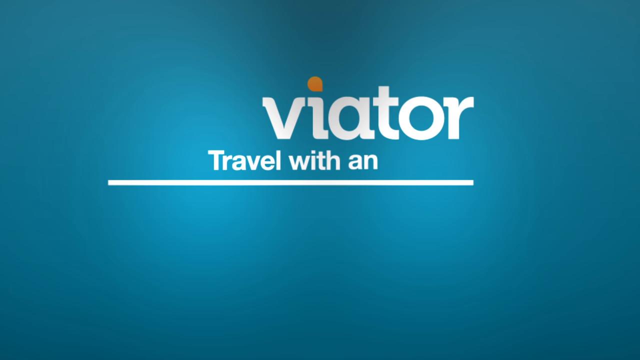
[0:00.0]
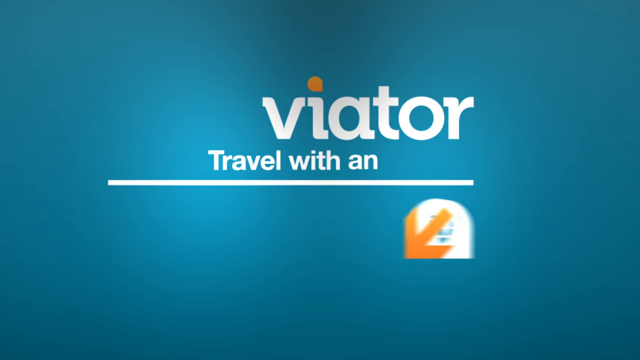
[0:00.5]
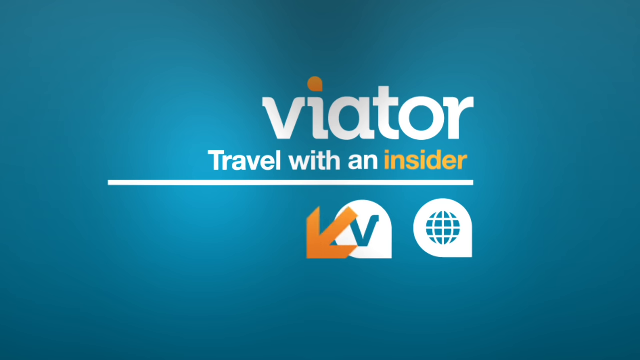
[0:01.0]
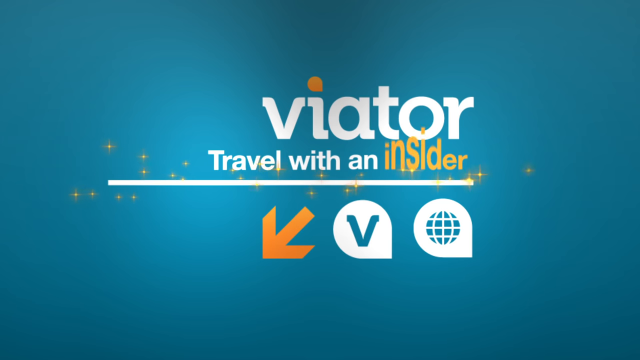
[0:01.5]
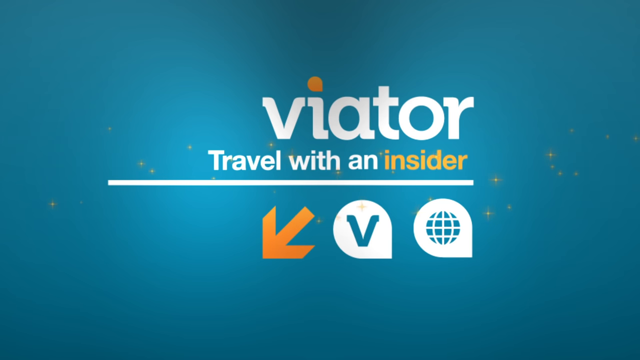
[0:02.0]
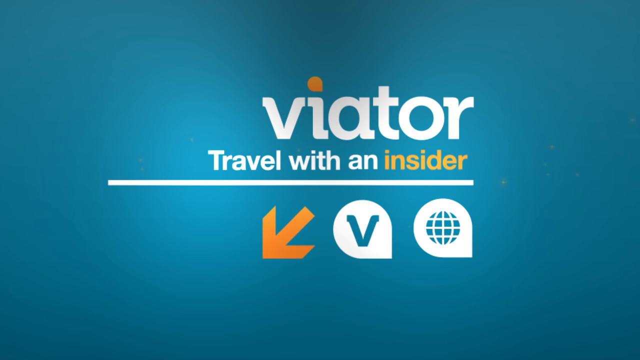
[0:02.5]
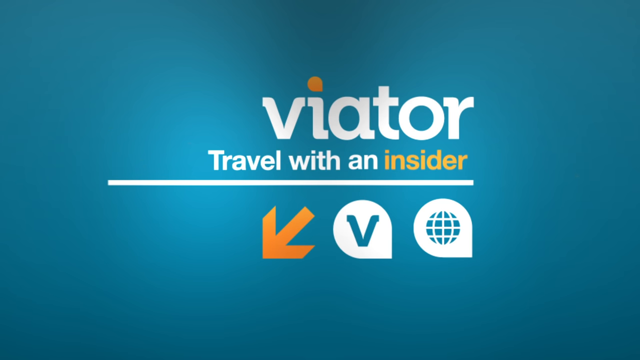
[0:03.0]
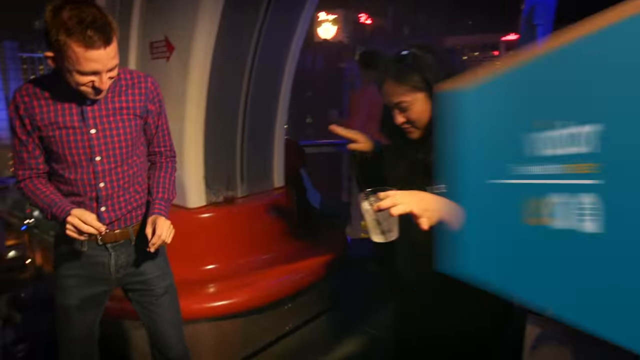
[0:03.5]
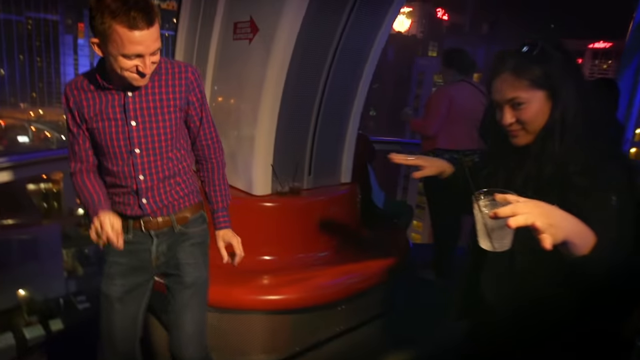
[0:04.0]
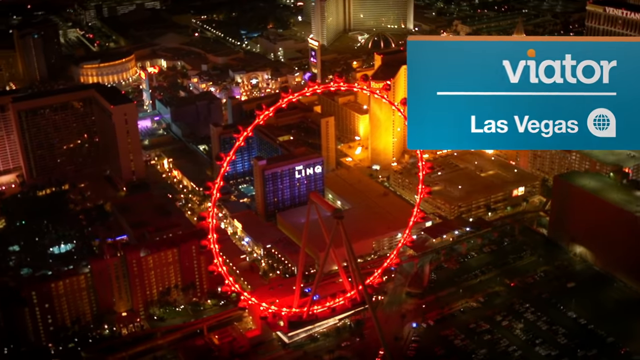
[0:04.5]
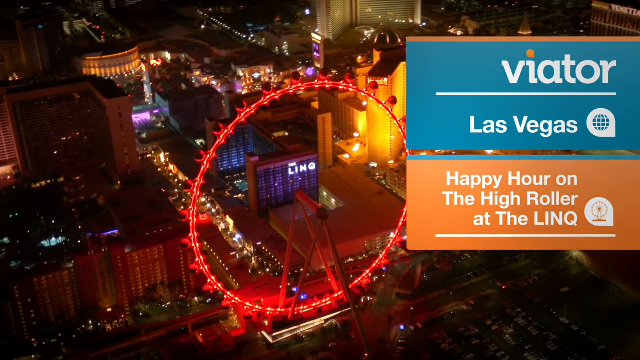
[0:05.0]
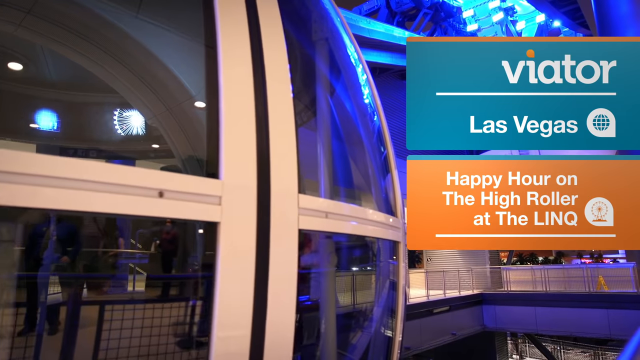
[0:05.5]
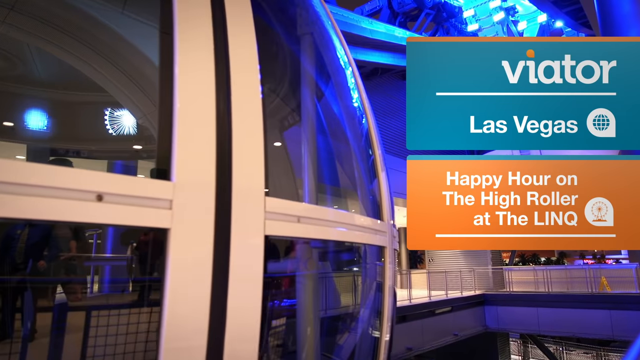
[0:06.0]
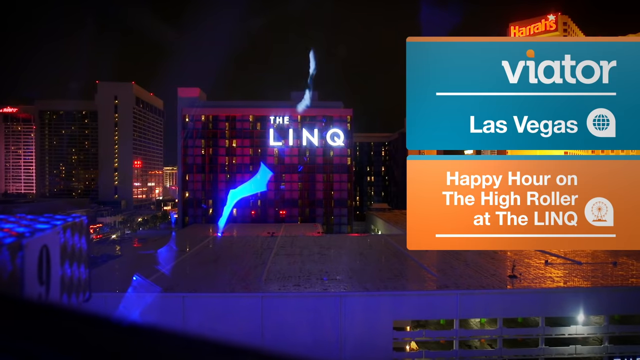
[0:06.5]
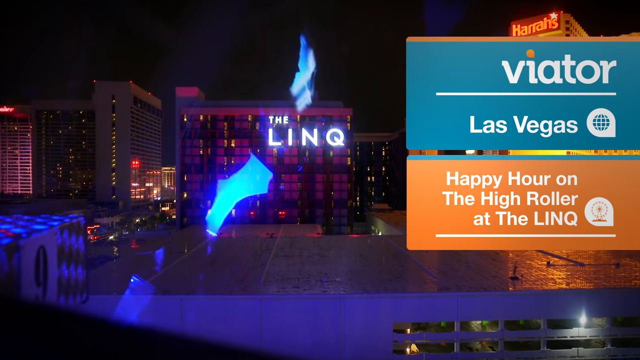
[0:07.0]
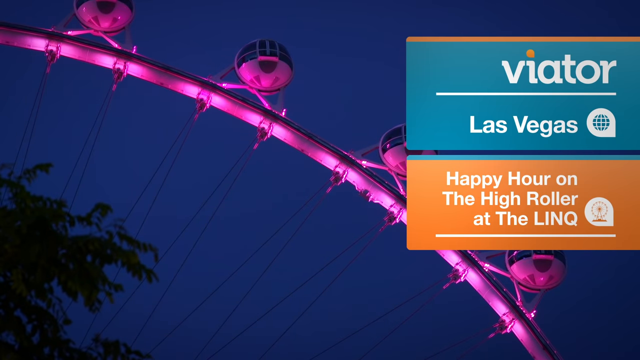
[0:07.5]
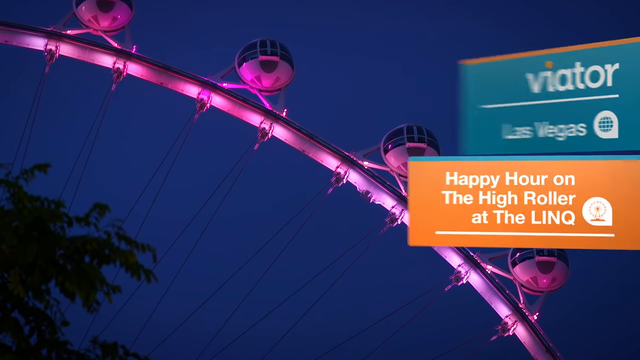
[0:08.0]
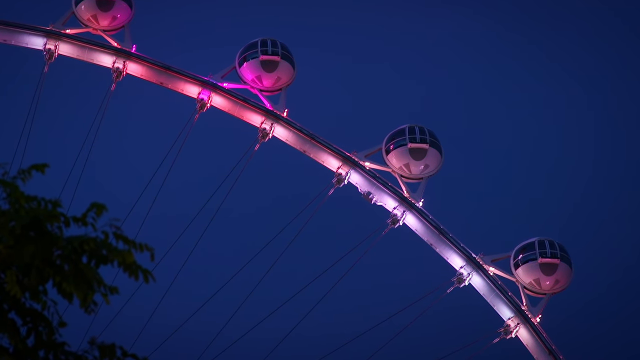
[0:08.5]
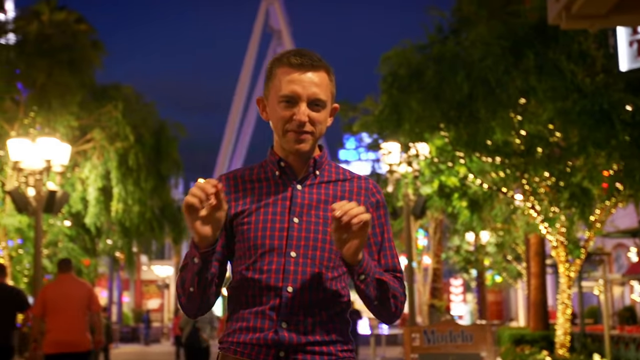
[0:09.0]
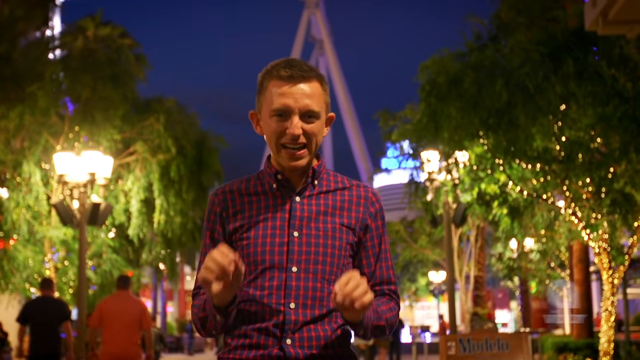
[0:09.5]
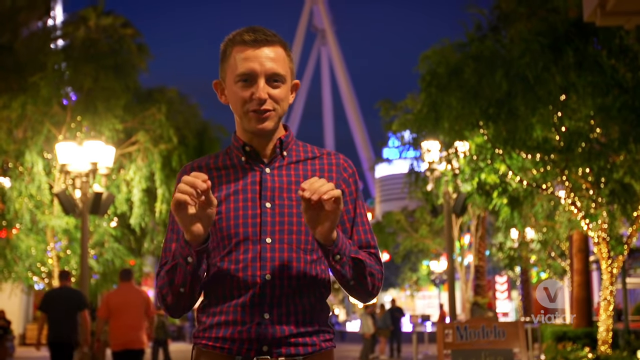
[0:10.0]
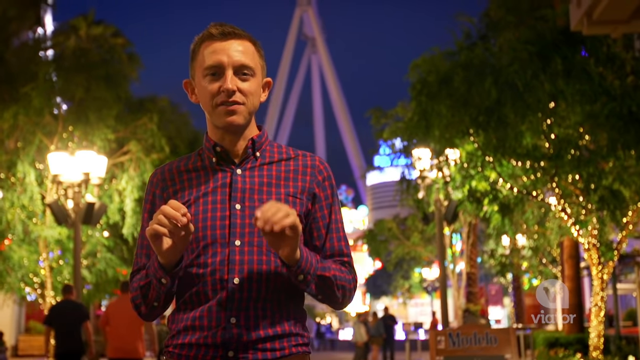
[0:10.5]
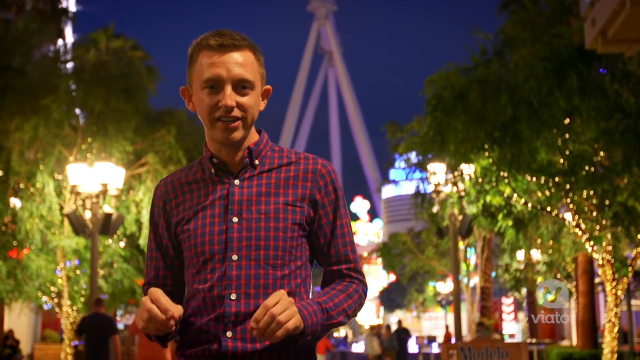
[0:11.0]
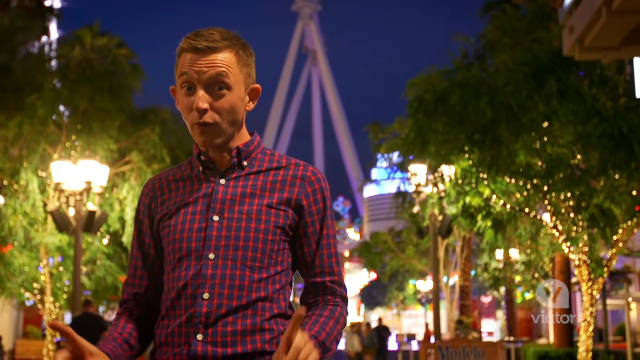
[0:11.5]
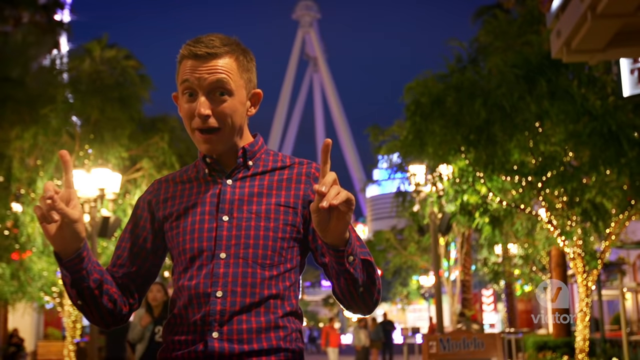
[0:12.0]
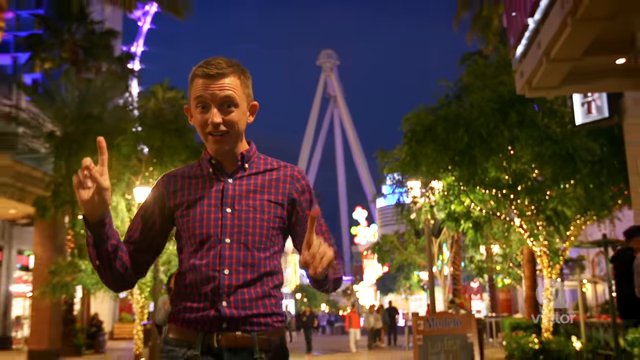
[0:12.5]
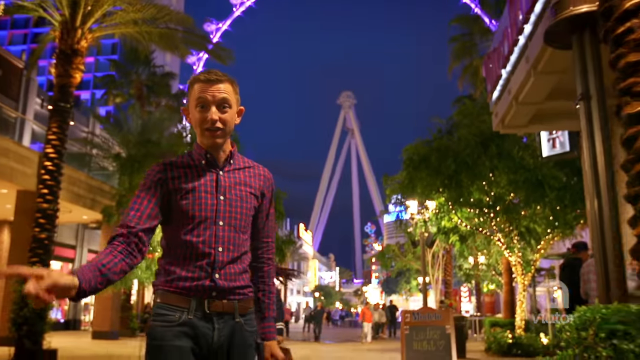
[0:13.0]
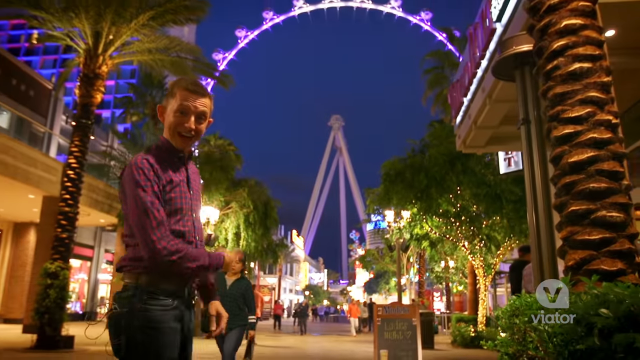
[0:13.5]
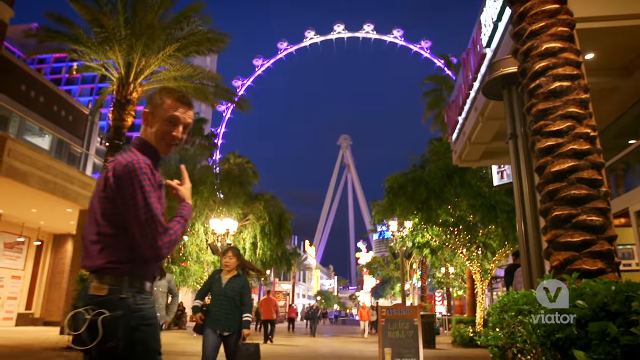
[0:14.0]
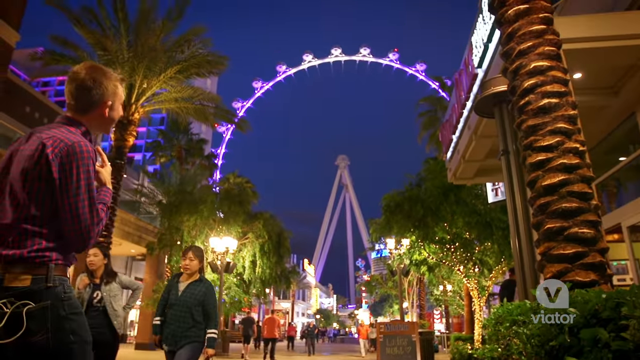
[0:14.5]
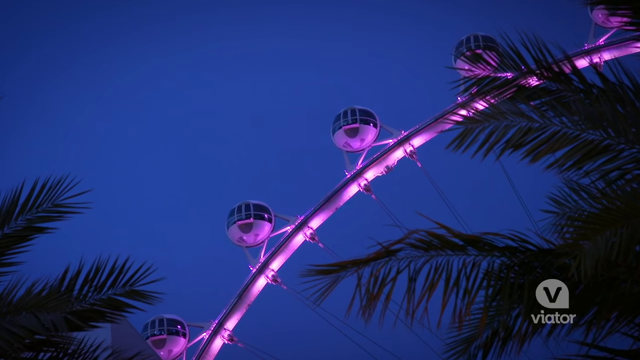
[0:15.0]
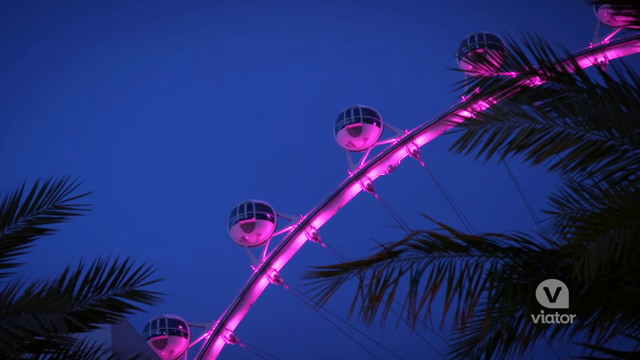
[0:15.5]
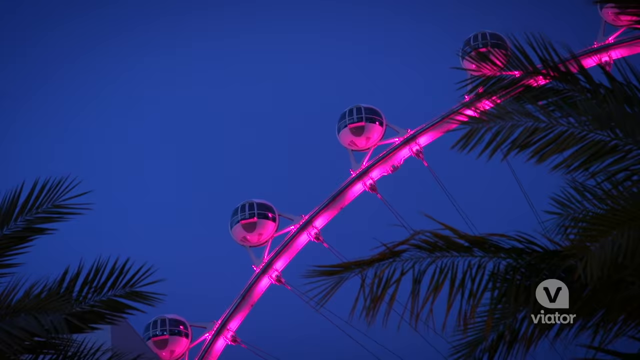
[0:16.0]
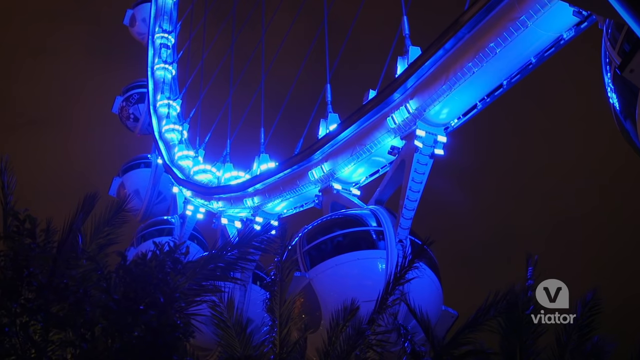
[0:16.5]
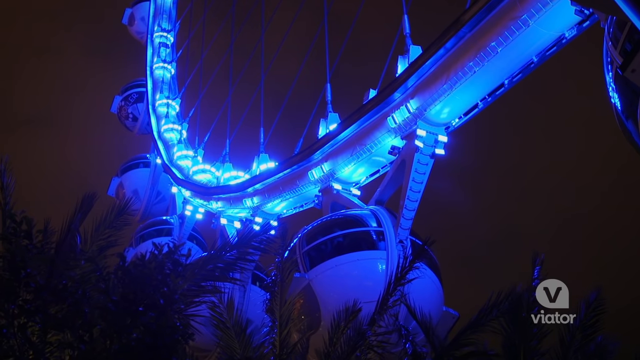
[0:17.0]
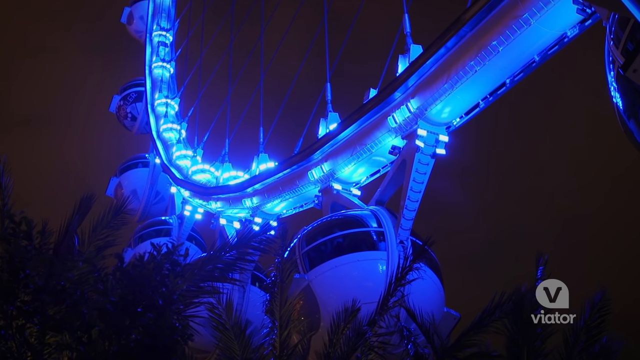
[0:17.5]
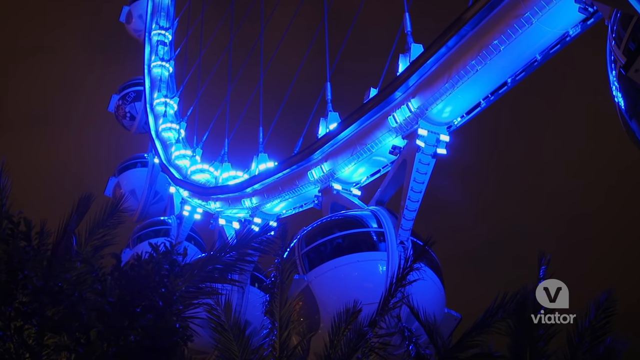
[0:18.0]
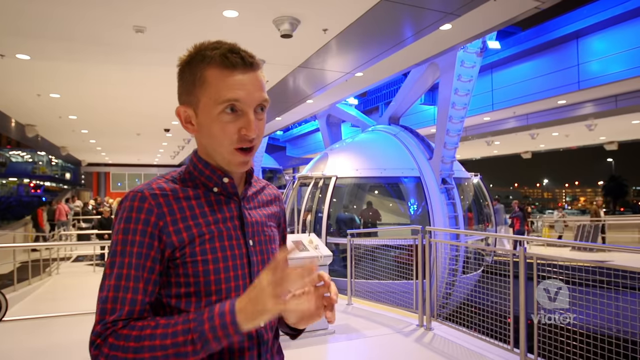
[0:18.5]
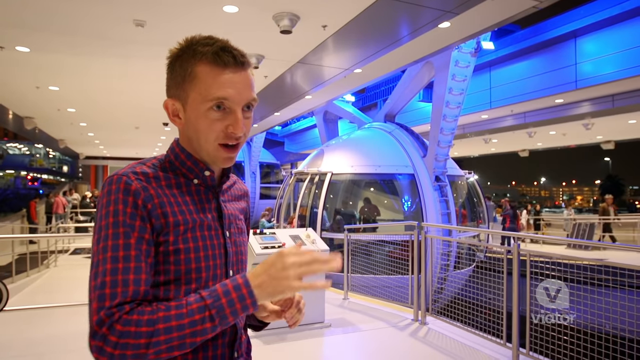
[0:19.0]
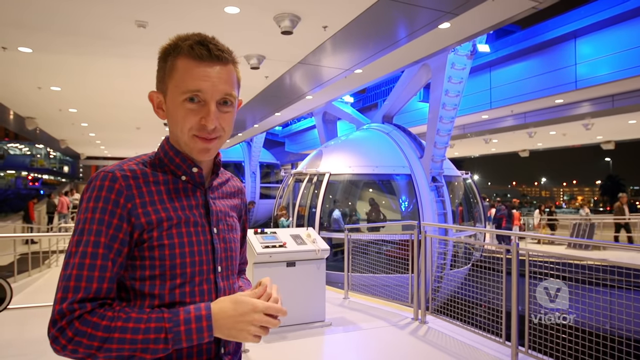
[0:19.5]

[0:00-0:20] Large text at the start reads "Viator, travel with an insider," with an arrow leading down to the left. Various amusements follow, including something like a kind of Ferris wheel that appears to have orbs on it and is lit up in different colors. A very excited young man in a black and red gingham shirt appears. The image then moves to the roller, or orb ride, which holds its orbs in a round circle; they are shown in a bluish, neon blue light that emanates from above them, stark against a black backdrop. The man in the black and red gingham shirt is shown again, gesticulating.